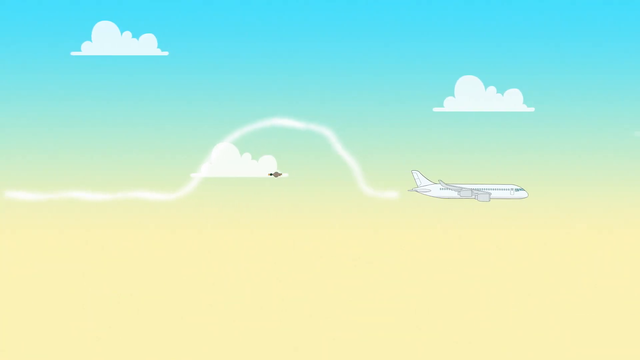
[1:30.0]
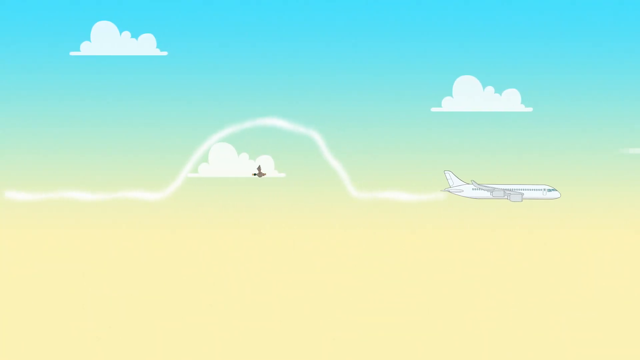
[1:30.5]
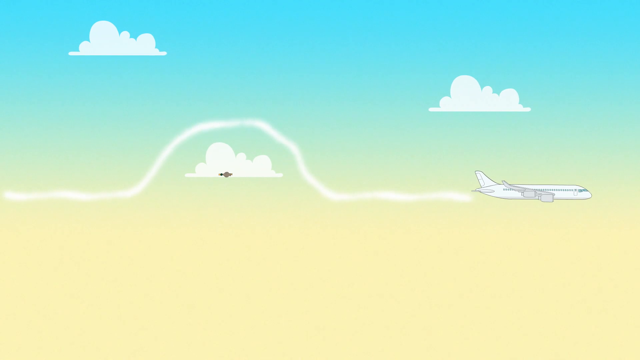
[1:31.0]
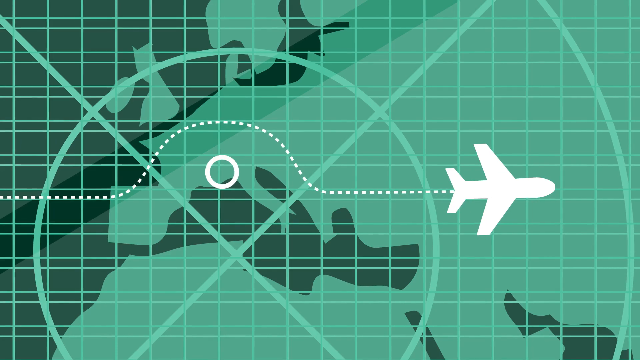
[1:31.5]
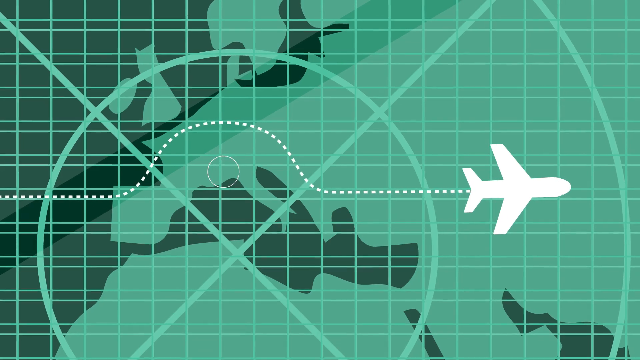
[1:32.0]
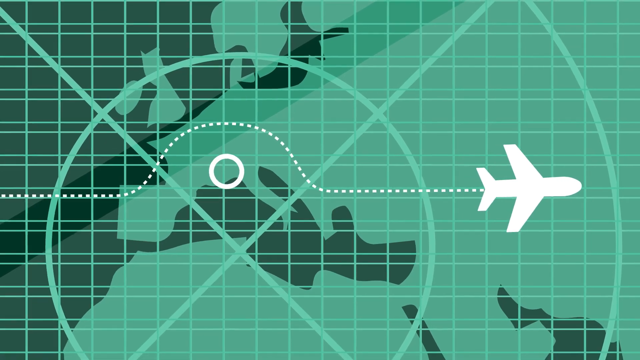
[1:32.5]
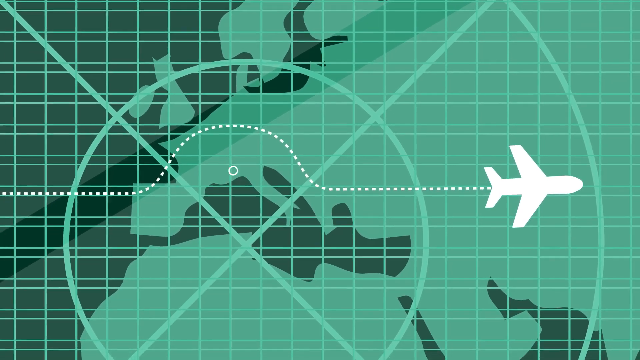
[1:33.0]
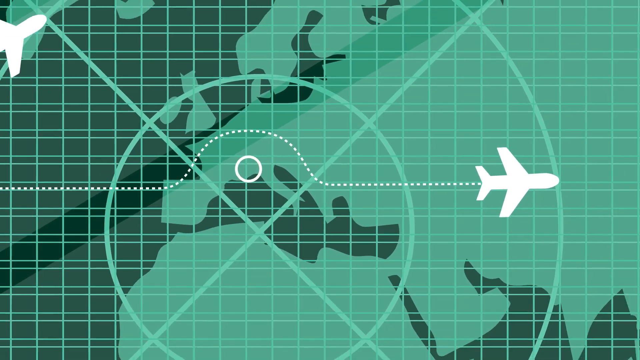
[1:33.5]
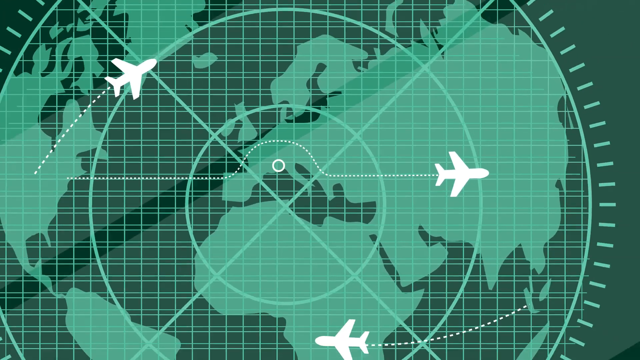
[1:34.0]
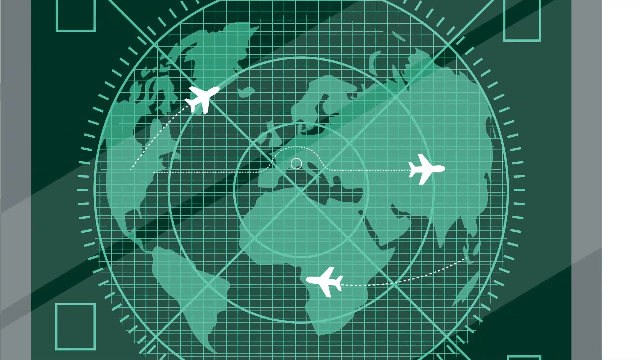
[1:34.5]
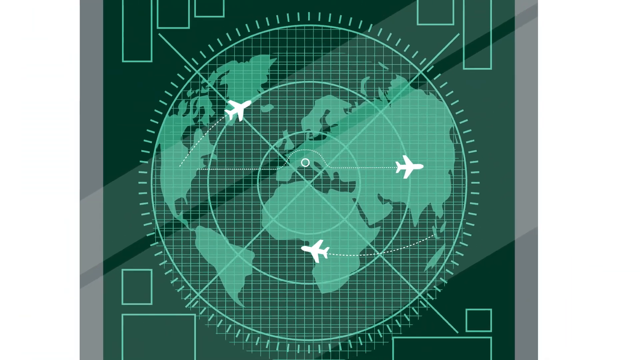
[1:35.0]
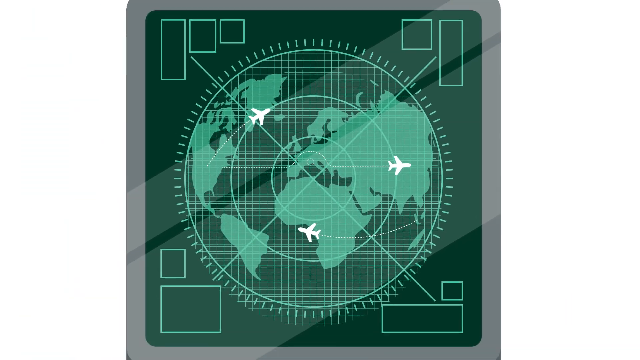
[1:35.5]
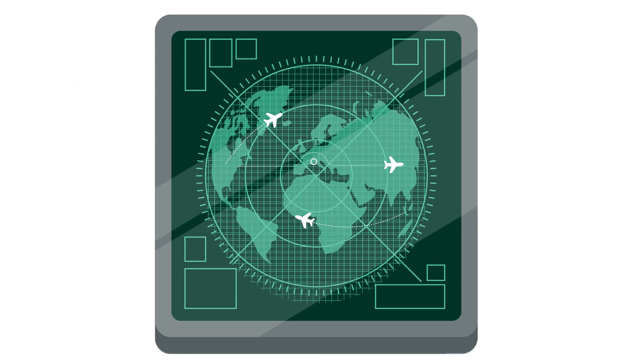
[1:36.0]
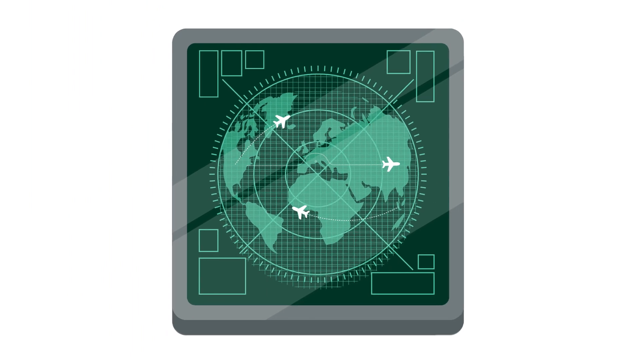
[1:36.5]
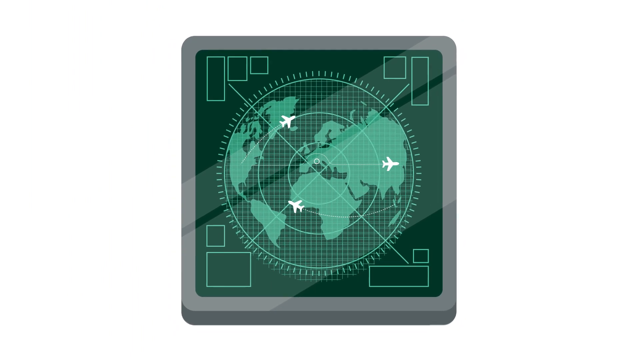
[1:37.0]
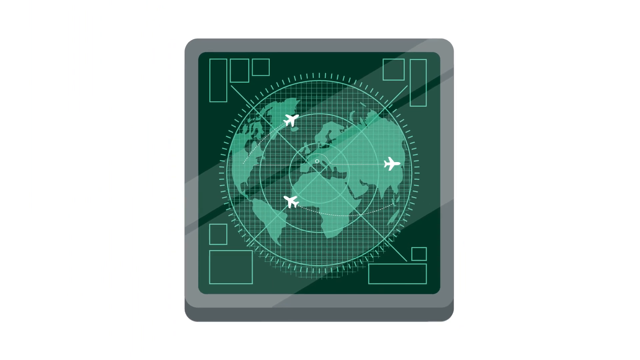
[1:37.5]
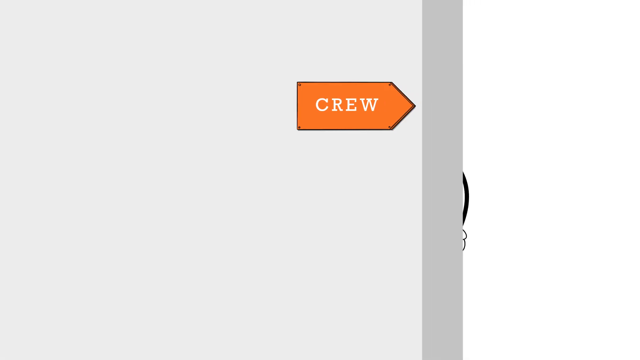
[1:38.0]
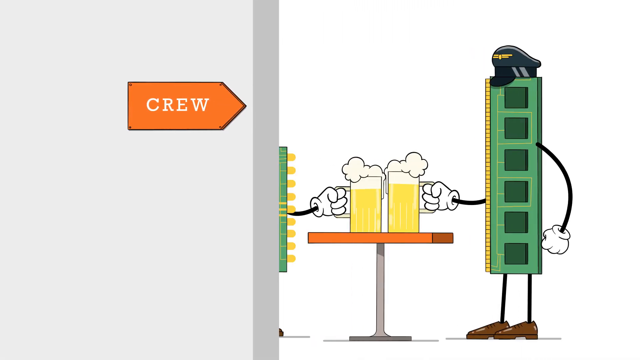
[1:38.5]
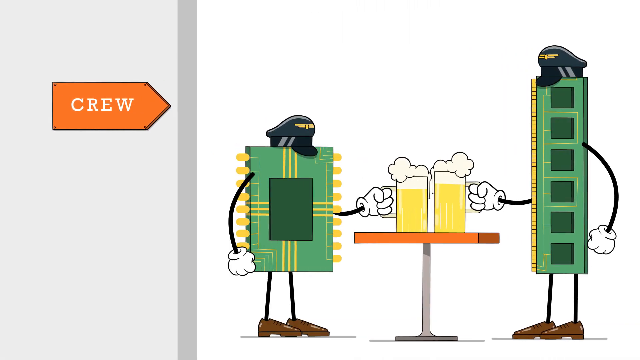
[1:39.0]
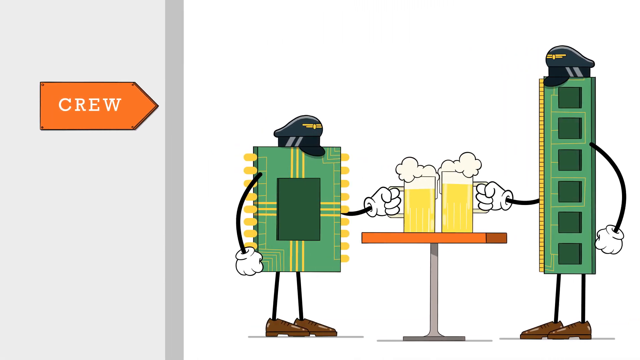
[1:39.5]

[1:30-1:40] A cartoon sky is blue at the top and yellow at the bottom, with three white clouds. The right side of a flying plane is visible along with a small duck in the center. The plane has flown from the left side of the screen over the duck to avoid hitting it, then comes back down and flies to the right side of the screen. An animated radar view shows the plane flying over the duck; the radar looks to be of the continent of Europe, and the duck is now a white circle near the top left of Italy. A dotted horizontal line starts on the left, moves right, curves over the white circle, comes back down and forms another horizontal line moving right. The top of the white plane and the green X of the radar are visible, the line moves, and the white circle pulses. Zooming outward reveals a radar of the entire globe: at the bottom, a white plane flies to the left with a dotted line behind it that seems to come from Japan, and in the top left another plane moves to the upper right with a dotted travel path starting in the center of the US. Moving backward, the green radar is surrounded by a gray square on a white background. An animated gray wall appears with an orange rectangle that has a triangle on its right side and the word "crew" inside it. The wall slides back to the left, and on the right is a computer animation of computer chips. On the right is what looks to be a horizontal green stick of computer RAM with thin black arms, gloved white hands, thin legs and a black captain's hat. On the other side is a green square chip with golden pieces coming out its left and right sides, a green chip in its center with golden lines running toward it, a captain's hat on top, and thin black arms with white gloves. Between the chips is an orange table with two mugs of beer, and both chips are holding the mugs.